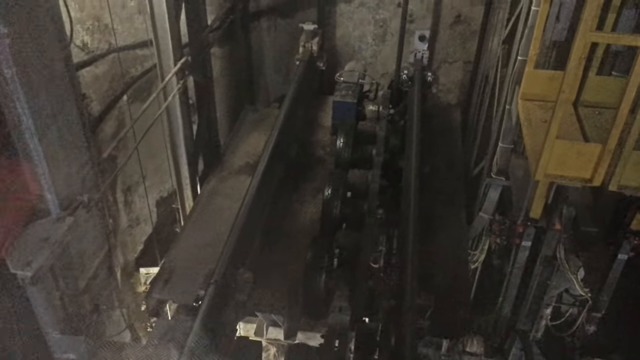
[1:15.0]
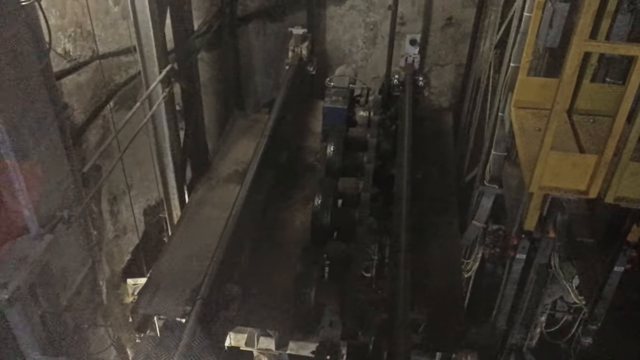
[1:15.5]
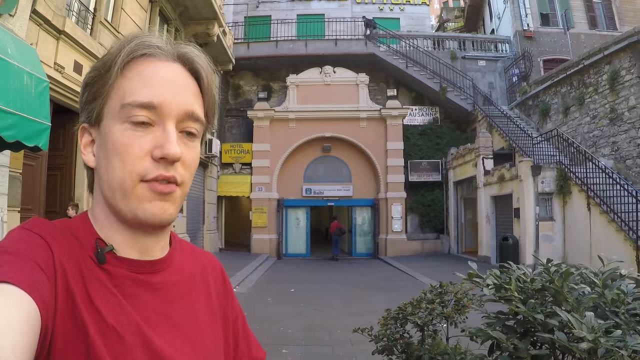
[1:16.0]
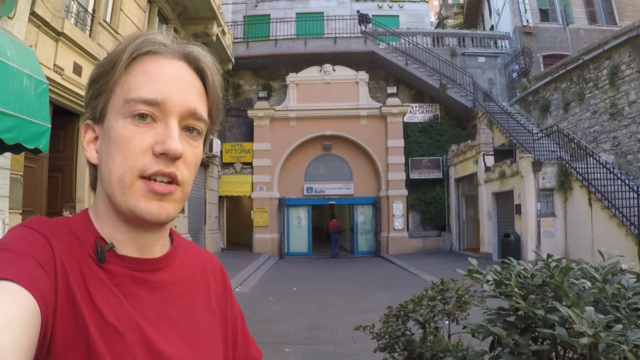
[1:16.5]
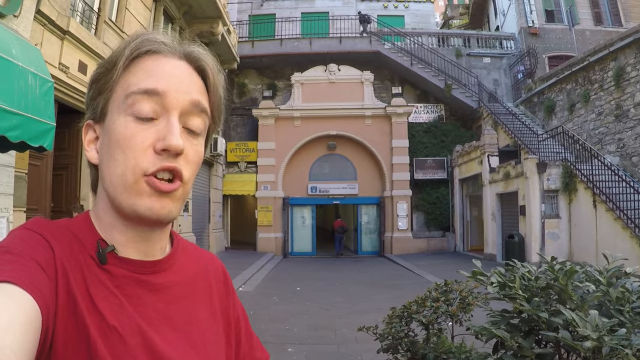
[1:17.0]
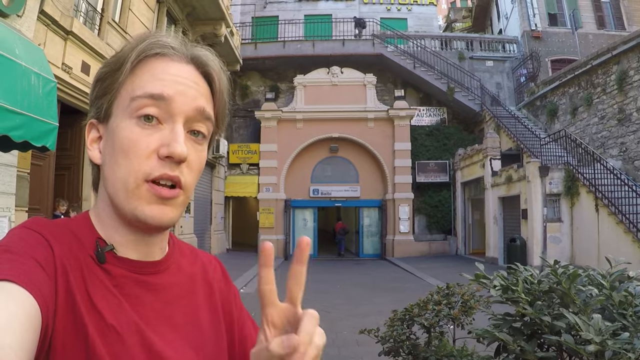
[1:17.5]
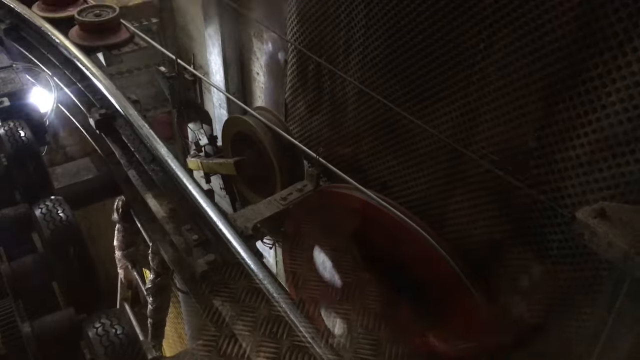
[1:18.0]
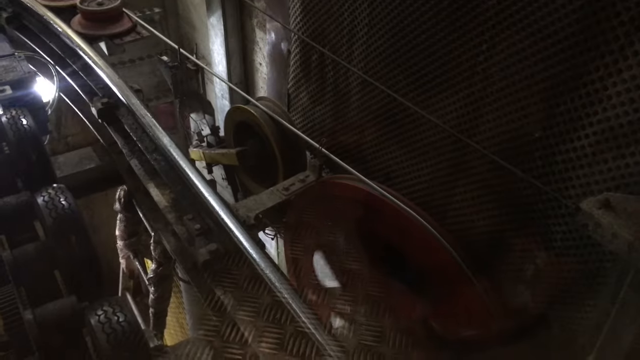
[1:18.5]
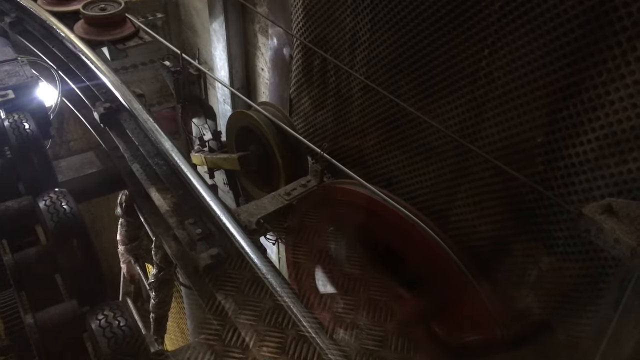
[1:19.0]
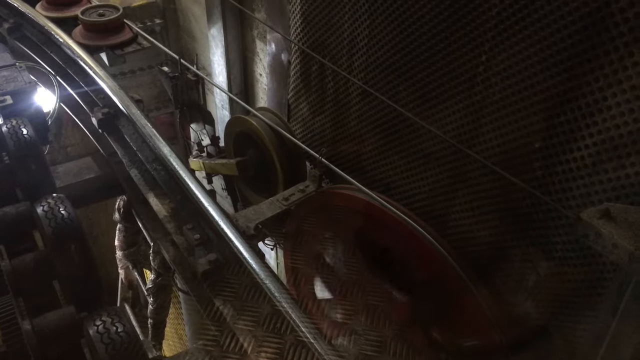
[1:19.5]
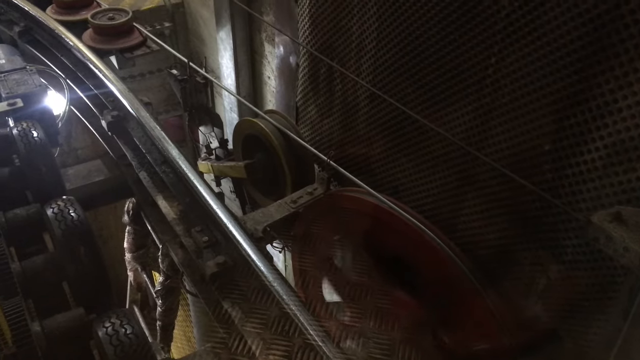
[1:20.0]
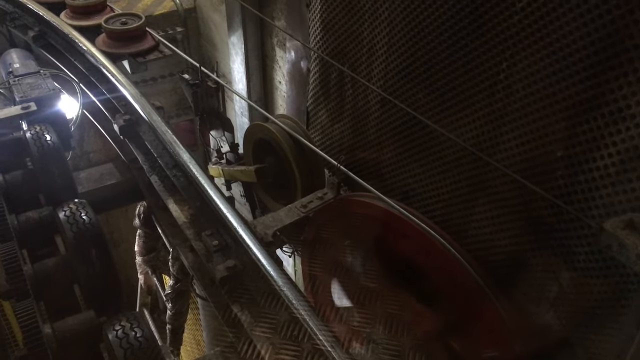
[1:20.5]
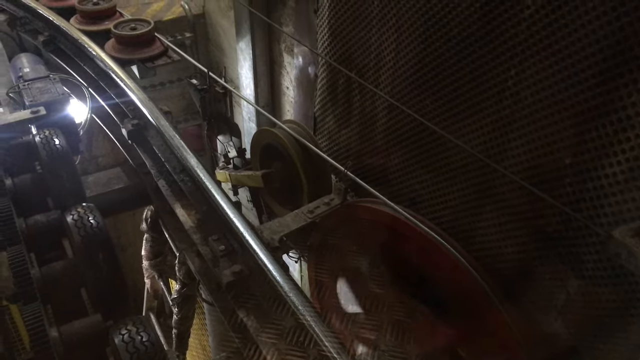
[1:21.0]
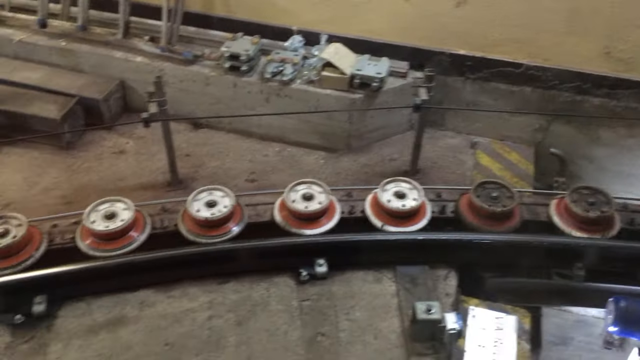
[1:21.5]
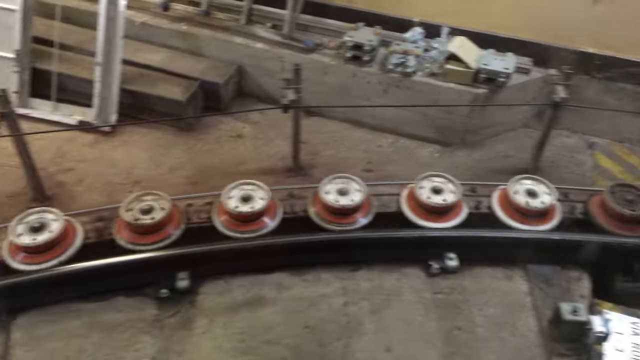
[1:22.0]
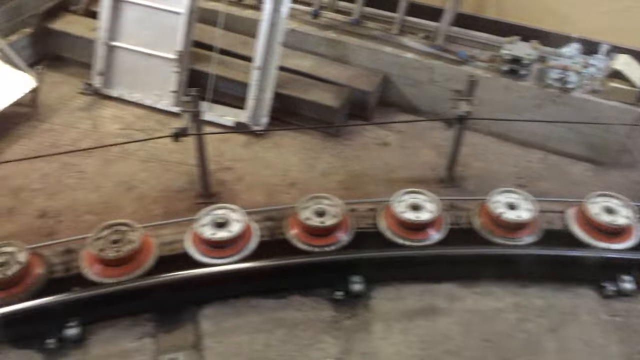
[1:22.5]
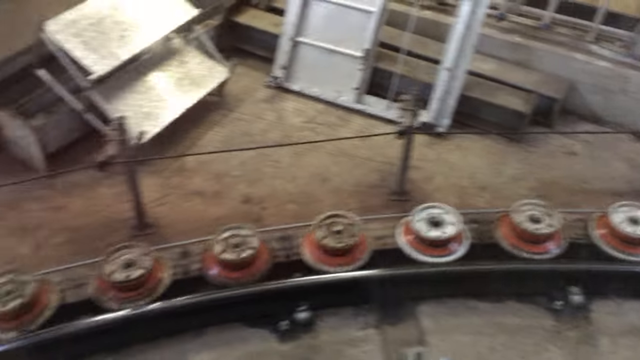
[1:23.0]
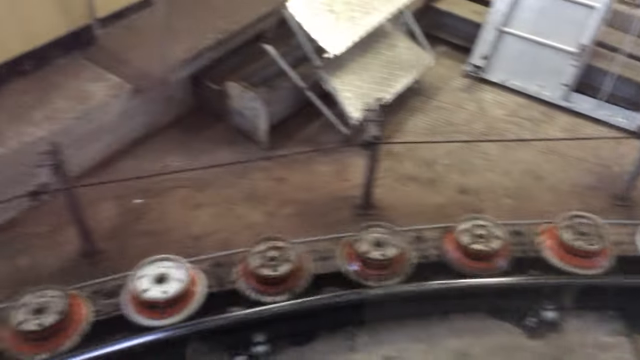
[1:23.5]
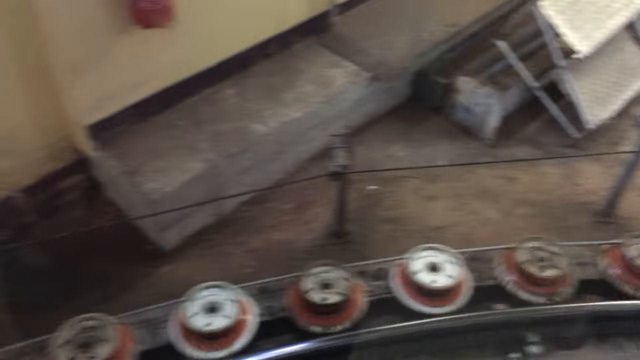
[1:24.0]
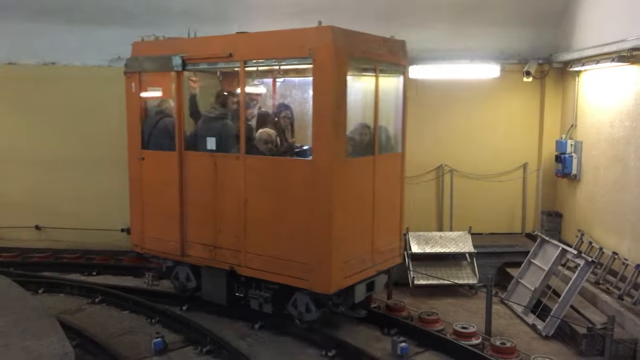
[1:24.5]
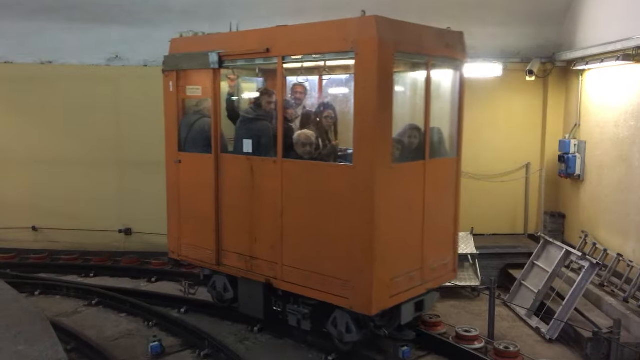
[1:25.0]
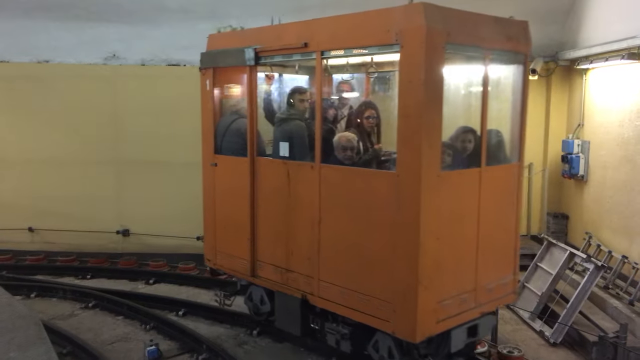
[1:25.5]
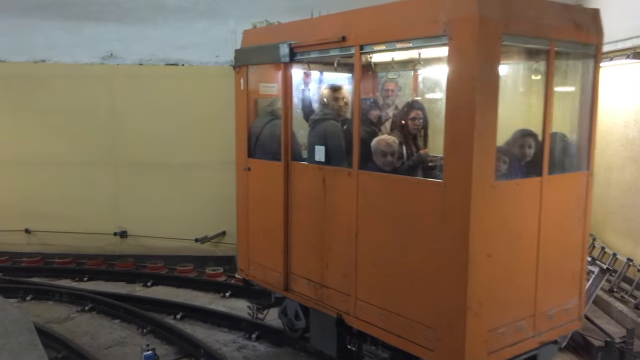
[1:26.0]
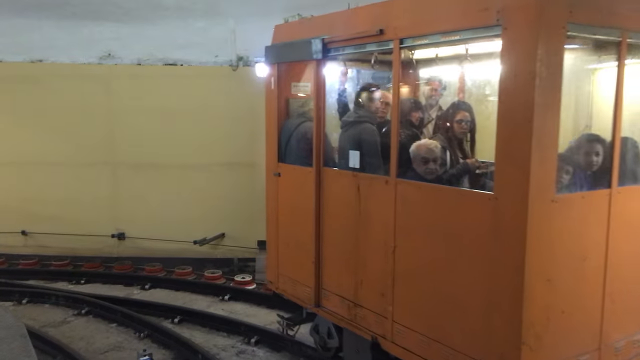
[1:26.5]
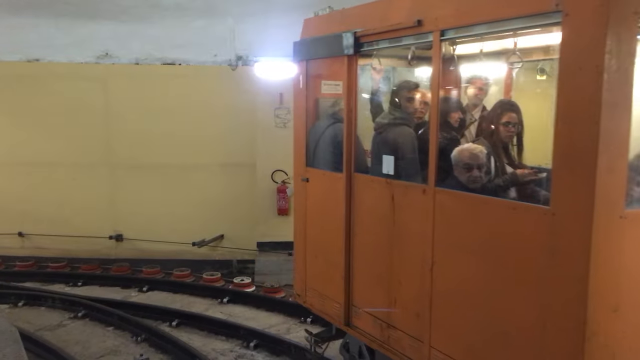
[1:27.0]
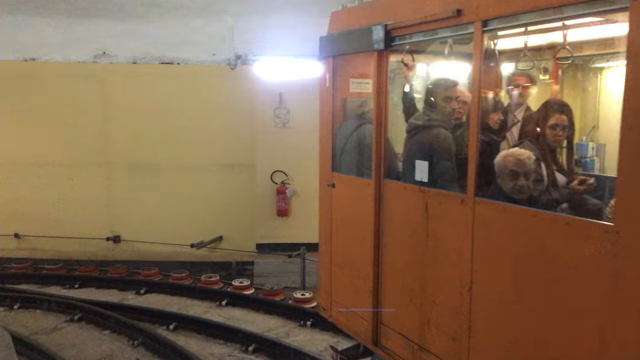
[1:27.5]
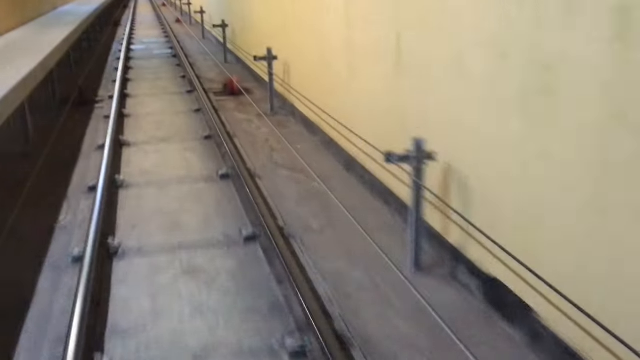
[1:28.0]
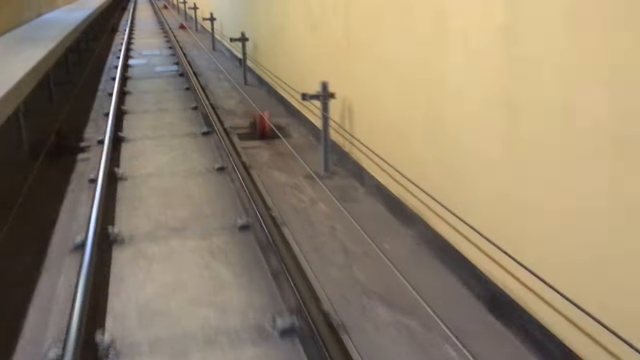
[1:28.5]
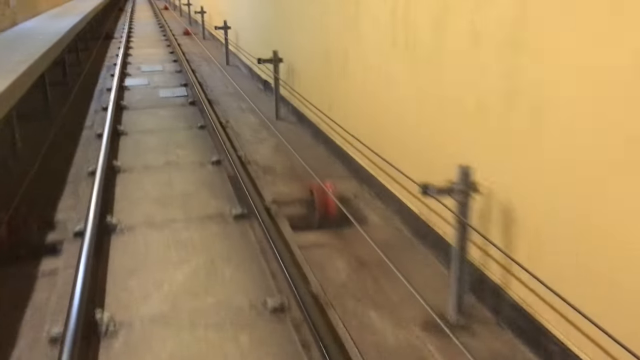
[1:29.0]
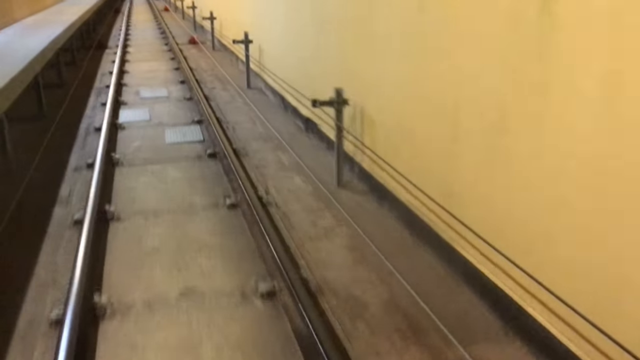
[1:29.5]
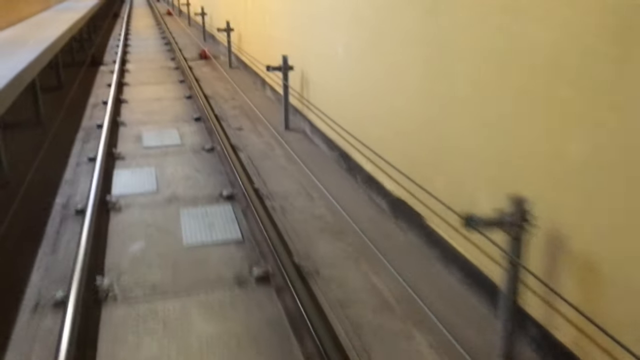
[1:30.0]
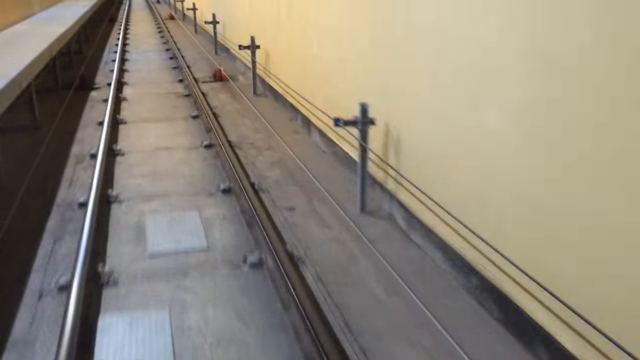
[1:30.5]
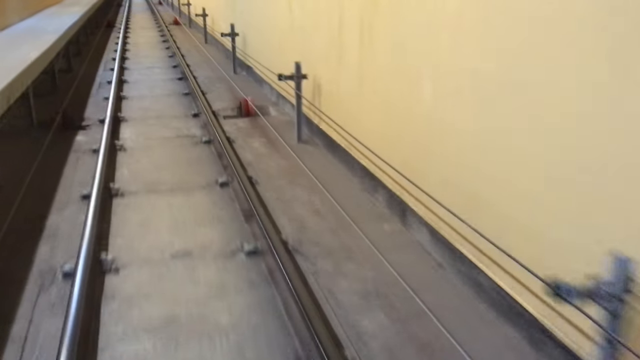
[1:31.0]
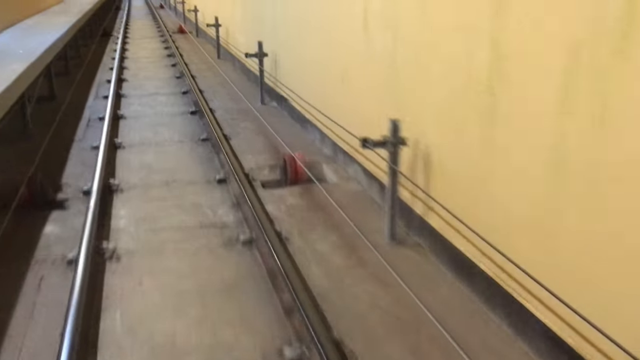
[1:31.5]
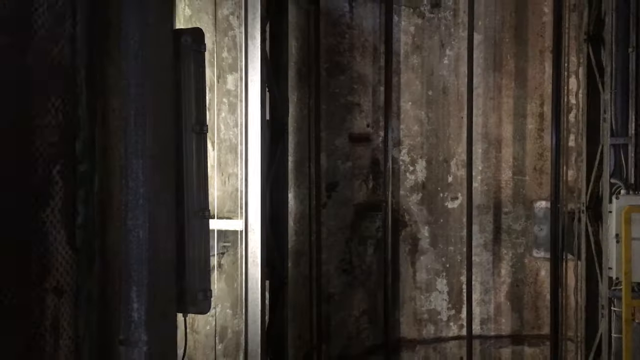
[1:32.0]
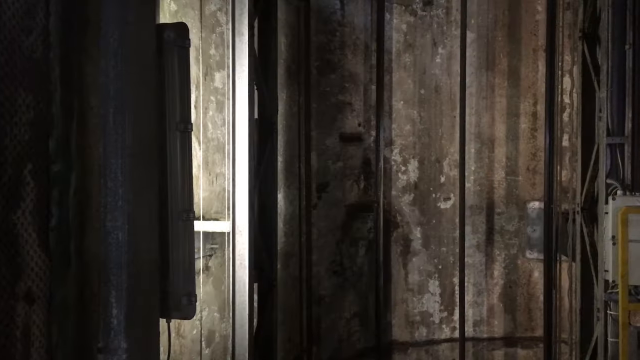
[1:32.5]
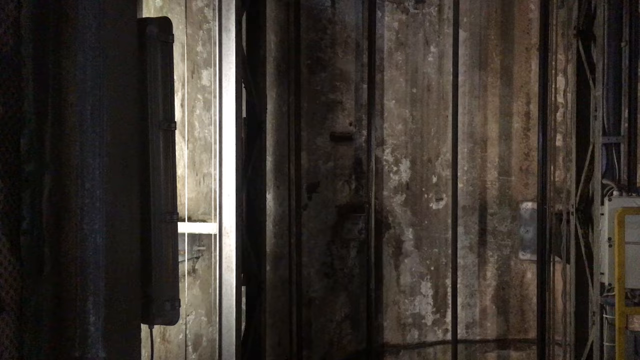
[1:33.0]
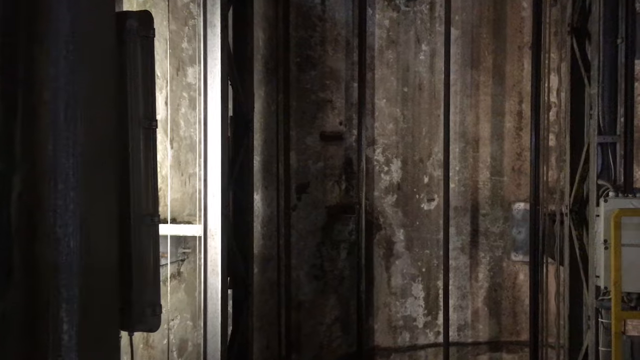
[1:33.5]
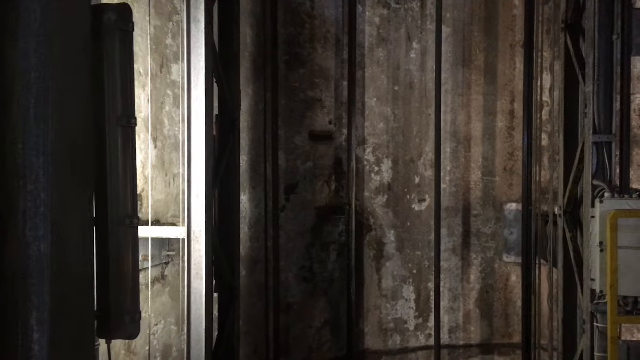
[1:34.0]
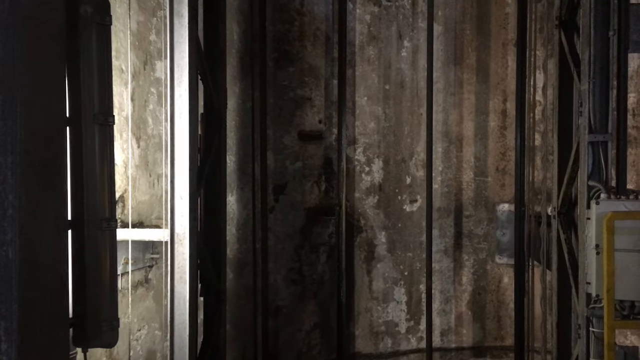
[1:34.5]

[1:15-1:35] The shaft and some of its mechanics are visible. A bunch of small wheels with red outlines spin clockwise beside the track, powering the machinery, as the elevator machine slowly goes by. A yellow box passes with a bunch of people on it, no more than 10. The camera then moves forward along a track in a perspective shot through a tunnel with yellow walls and bars on the side. At the end there is a stone shaft, rectangular or square in shape, where apparently the only way is up. Lights adorn the top of the walls, and there are little spigots on the ground.